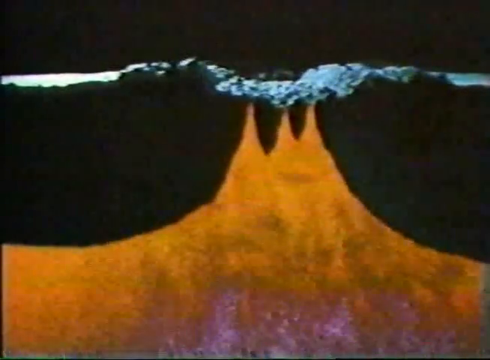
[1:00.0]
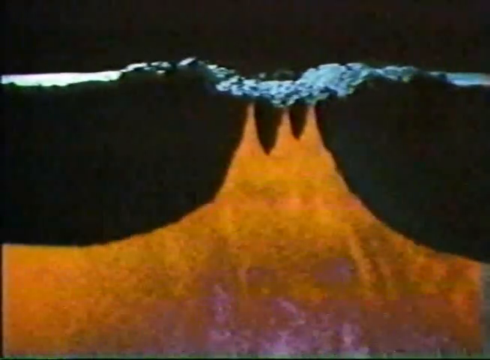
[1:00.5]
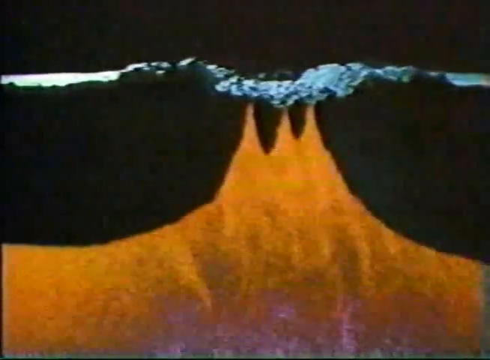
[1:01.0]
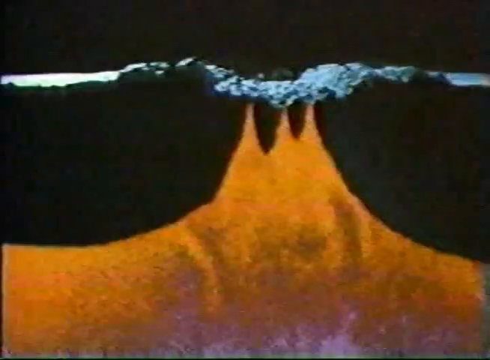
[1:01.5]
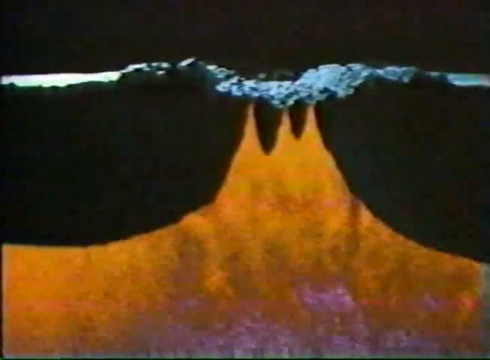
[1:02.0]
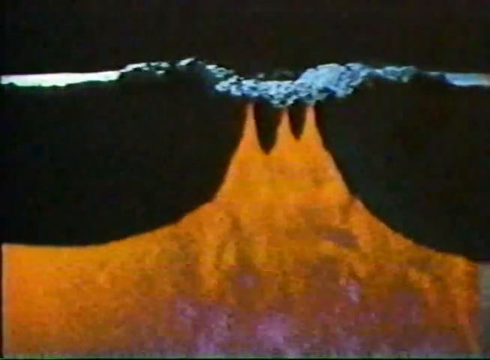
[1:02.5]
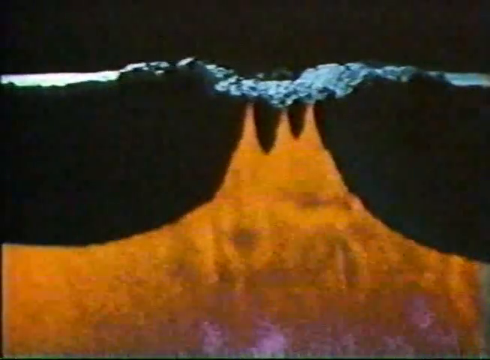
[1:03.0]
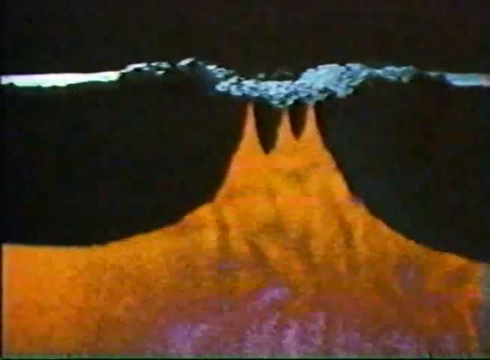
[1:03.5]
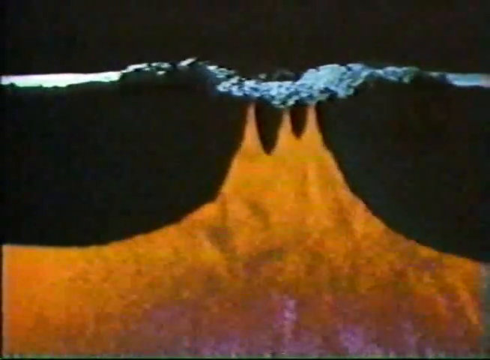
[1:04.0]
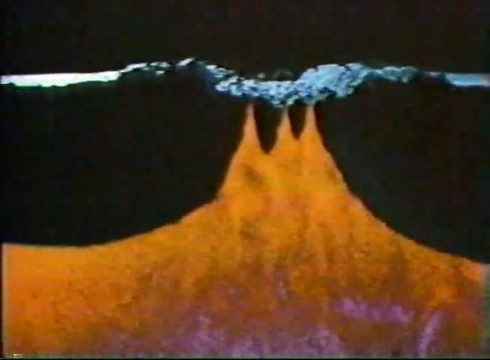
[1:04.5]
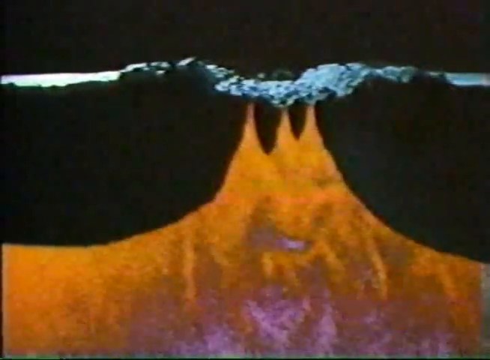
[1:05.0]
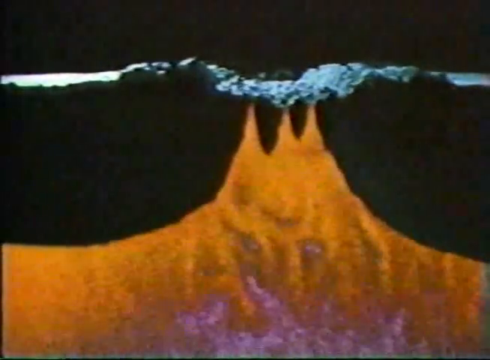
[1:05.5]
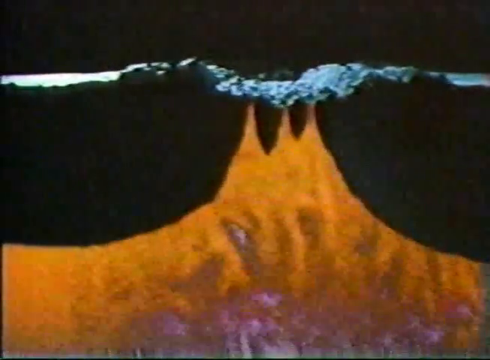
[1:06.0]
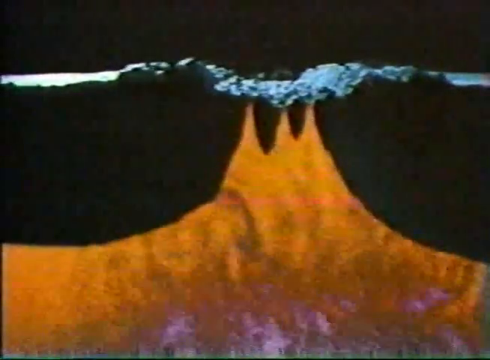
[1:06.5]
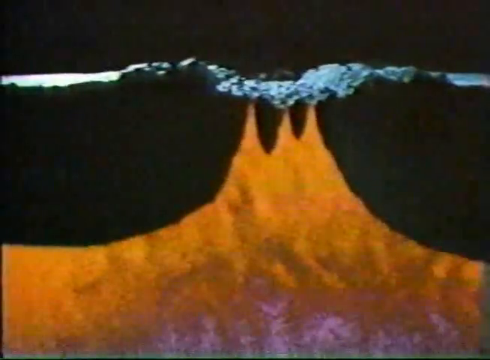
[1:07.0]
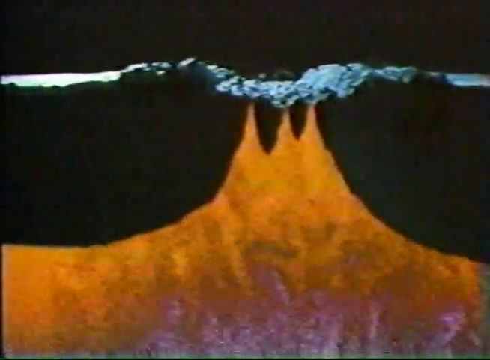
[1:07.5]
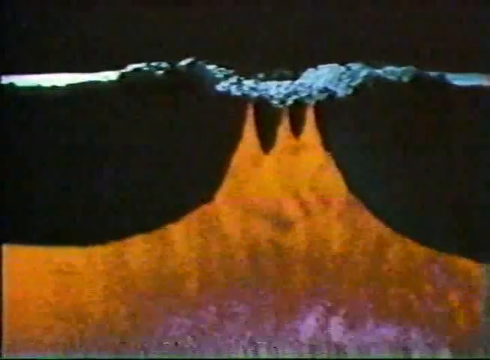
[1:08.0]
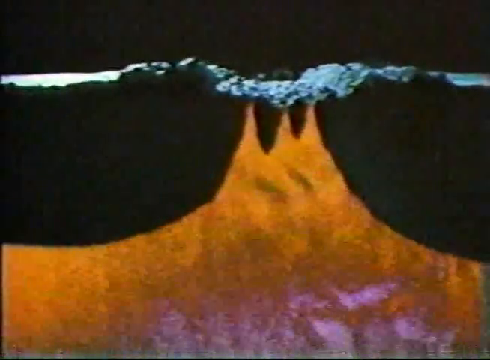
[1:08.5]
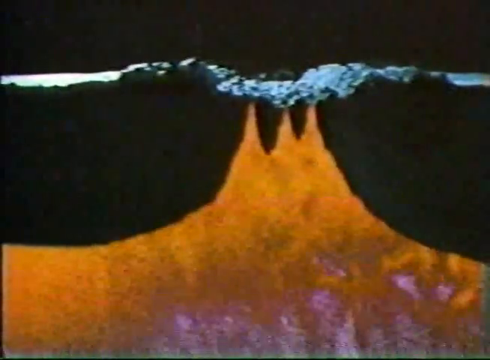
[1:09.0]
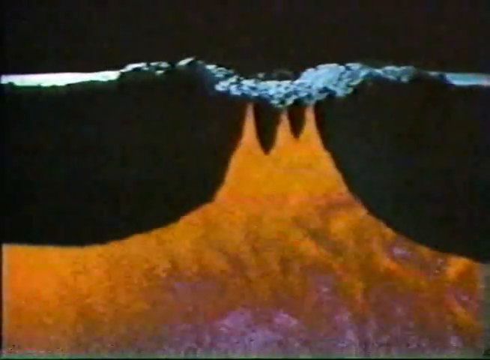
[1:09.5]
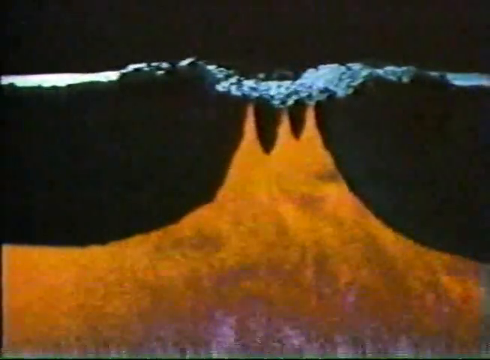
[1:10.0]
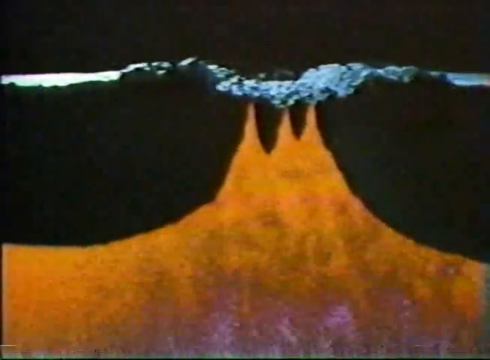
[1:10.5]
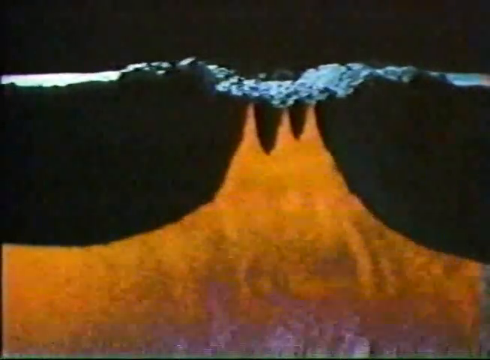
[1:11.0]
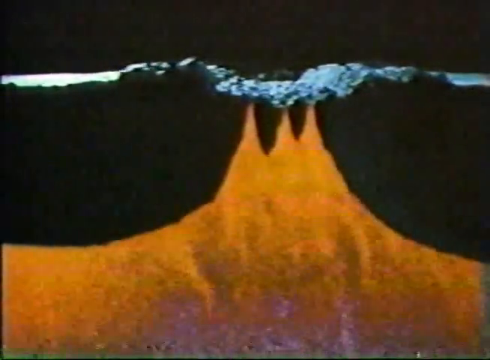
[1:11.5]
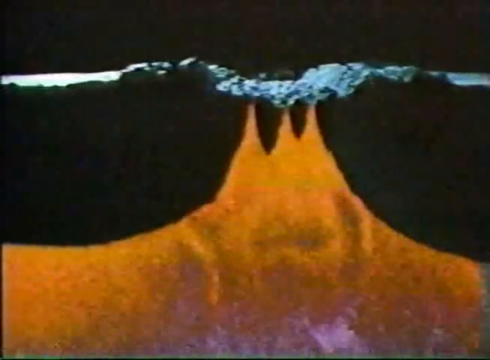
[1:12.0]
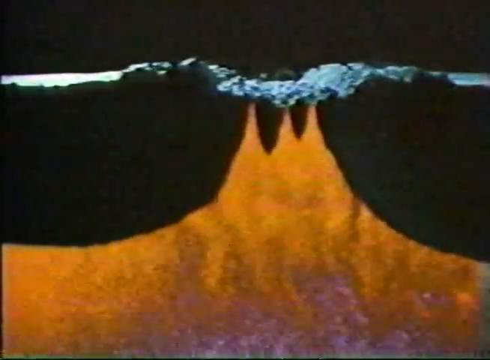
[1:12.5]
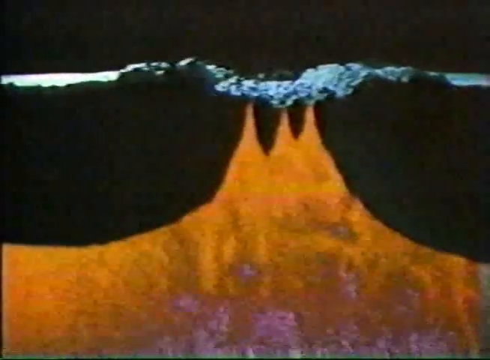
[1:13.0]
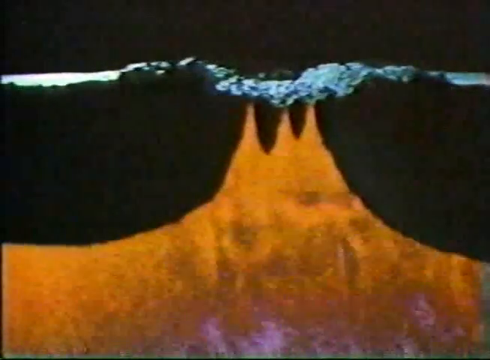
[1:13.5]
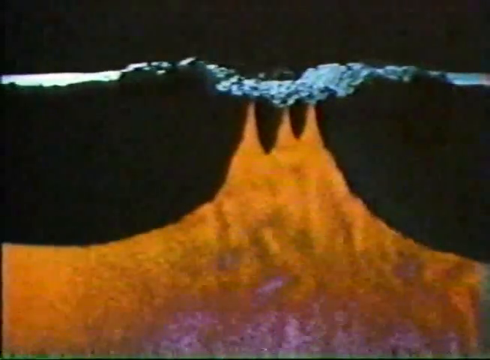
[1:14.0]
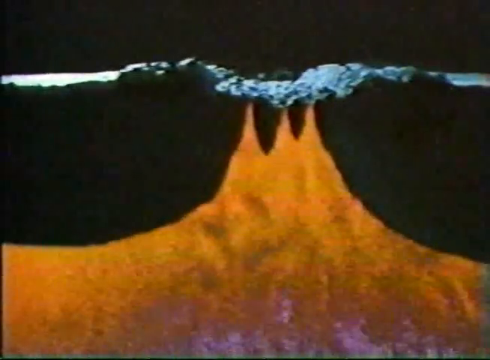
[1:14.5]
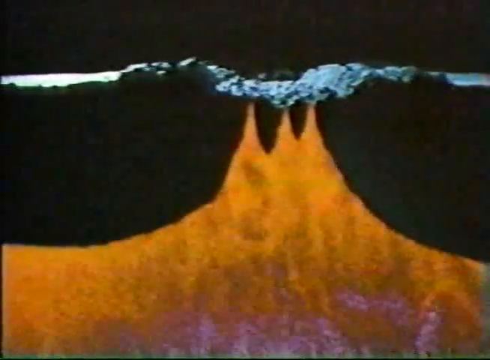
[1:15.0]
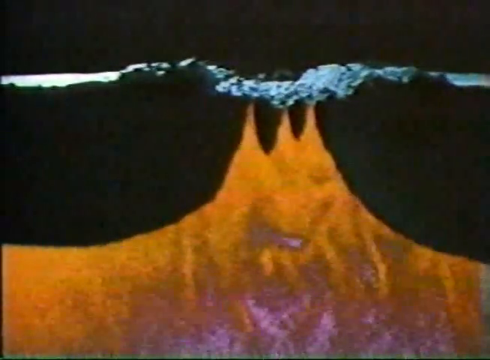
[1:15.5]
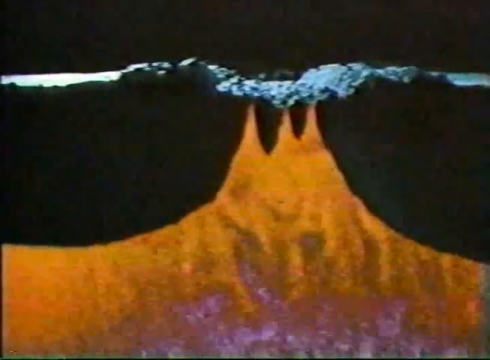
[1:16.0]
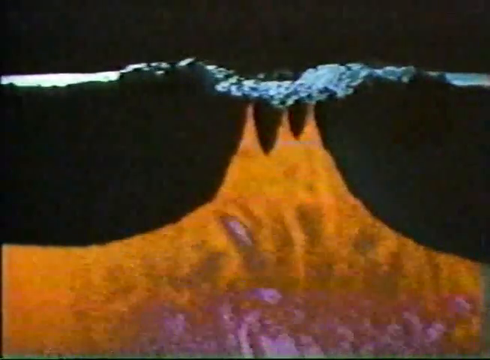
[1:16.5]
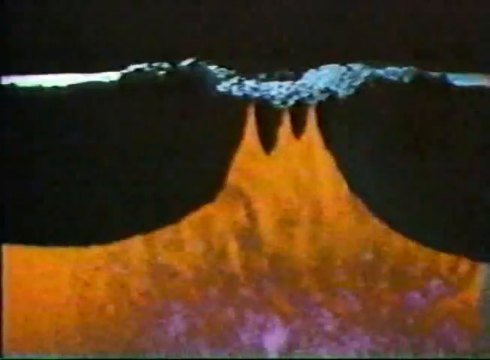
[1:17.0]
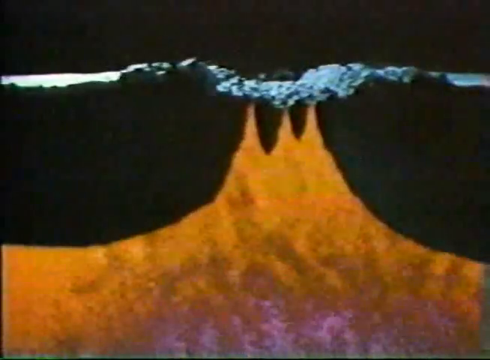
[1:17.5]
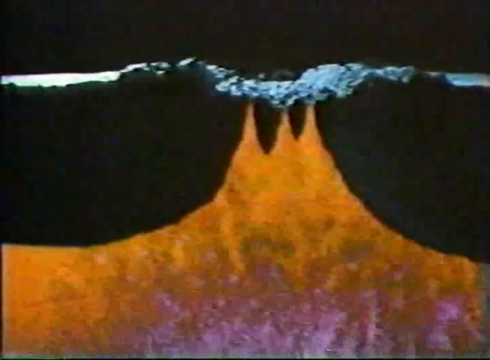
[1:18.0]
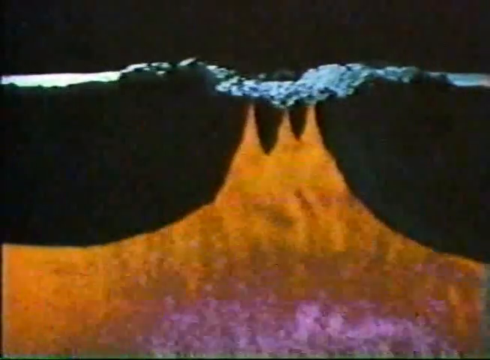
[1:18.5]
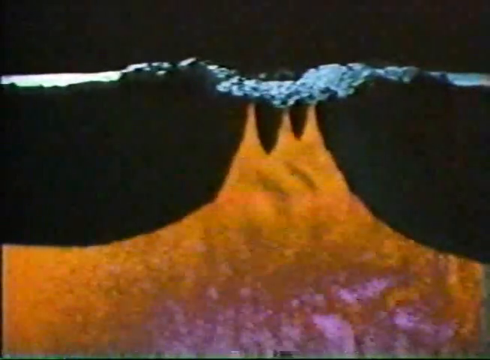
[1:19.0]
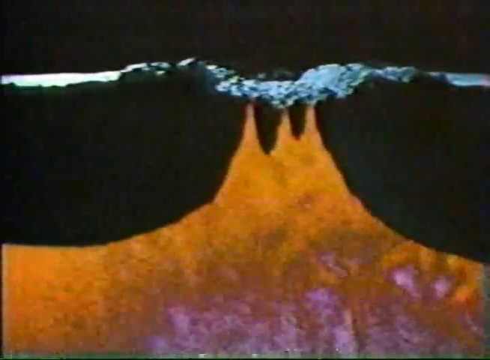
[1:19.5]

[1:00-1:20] An orange flame is surrounded by dark color, with something that looks like a surface on top. The orange flame grows, still with a lot of flame. Sunlight is visible on top. Although the surroundings are very dark, it looks like an erupting volcano. Below the orange flame there is a purplish flame. The sides are dark, with a large dark space on the left and a small dark space on the right. The surface is textured, with sunlight on it, and is almost blue-grayish in color.